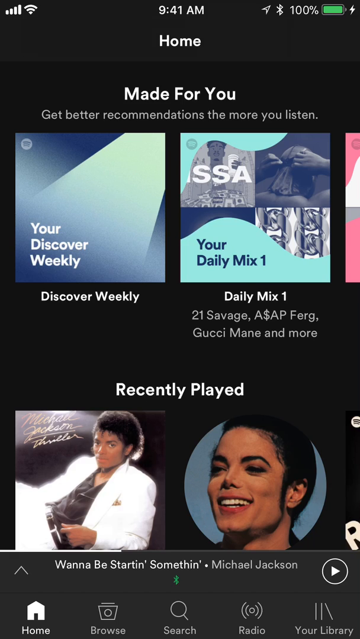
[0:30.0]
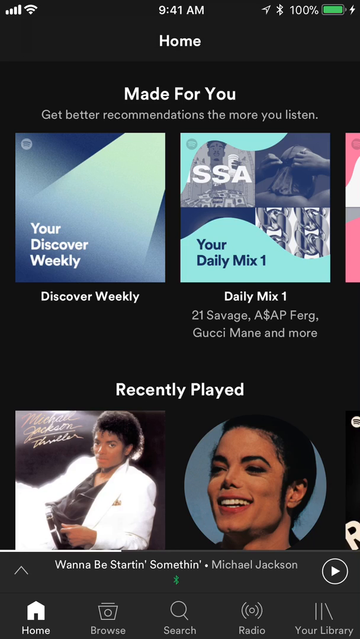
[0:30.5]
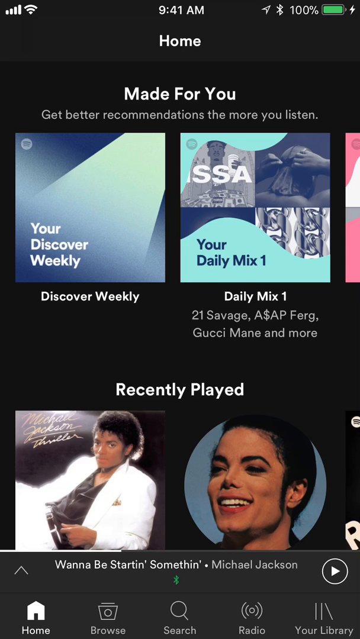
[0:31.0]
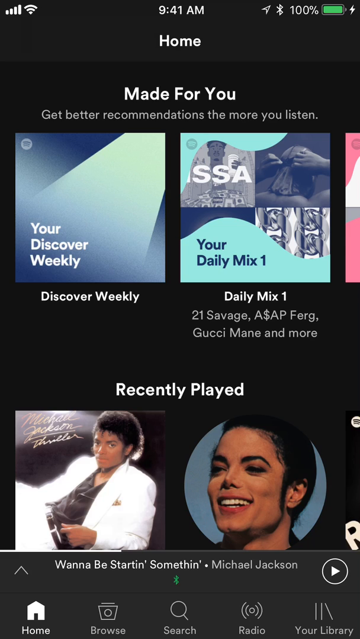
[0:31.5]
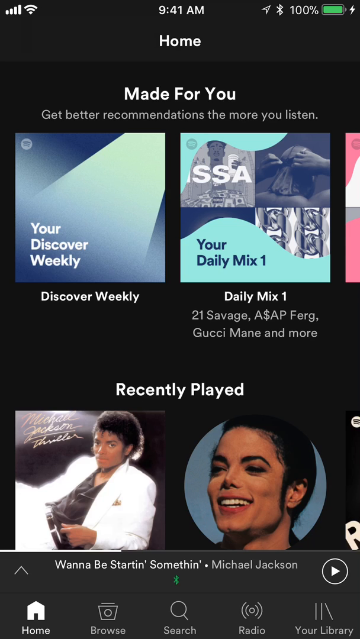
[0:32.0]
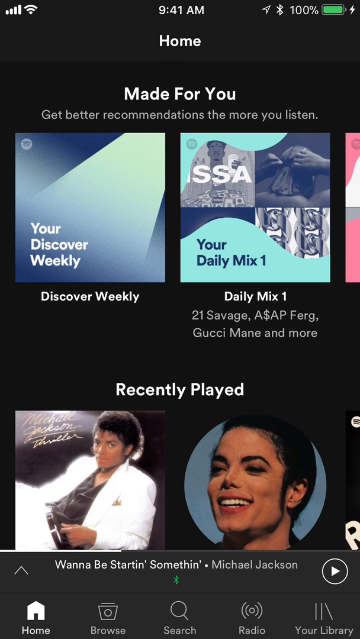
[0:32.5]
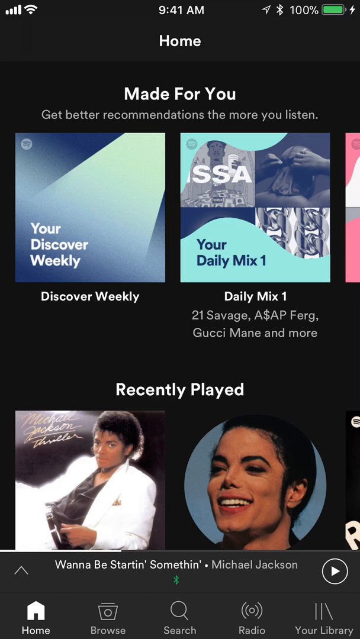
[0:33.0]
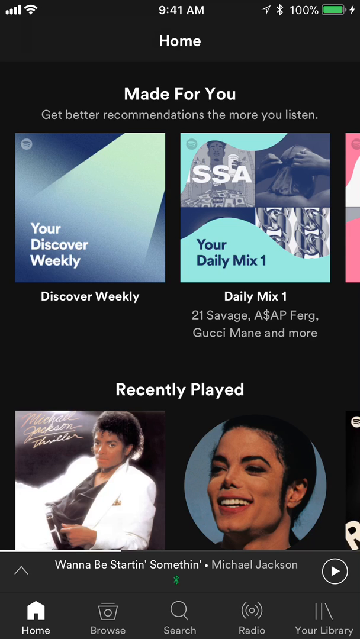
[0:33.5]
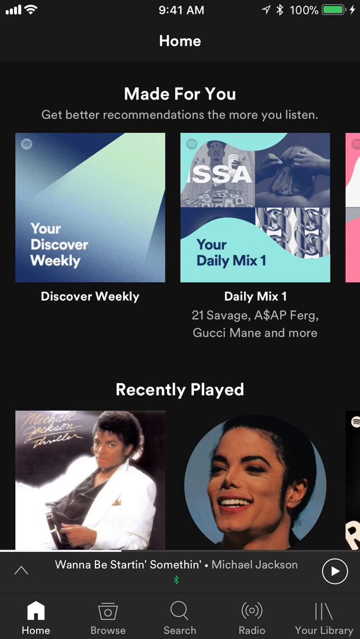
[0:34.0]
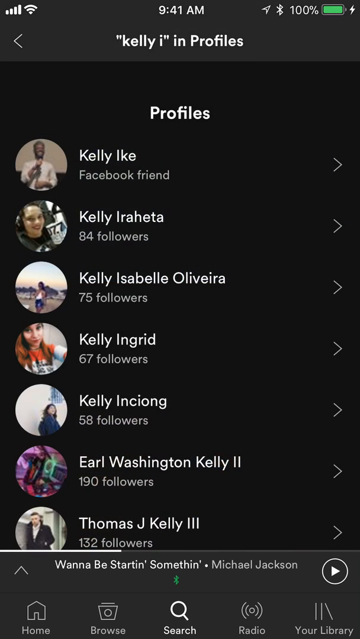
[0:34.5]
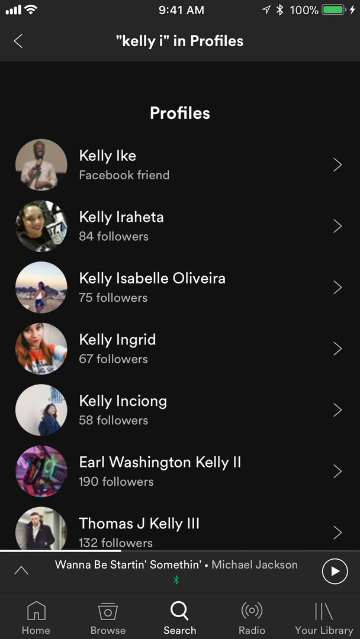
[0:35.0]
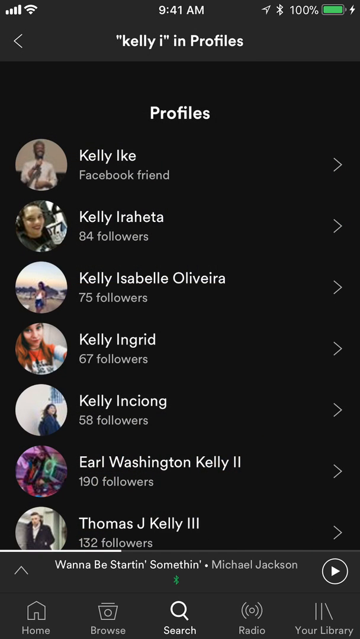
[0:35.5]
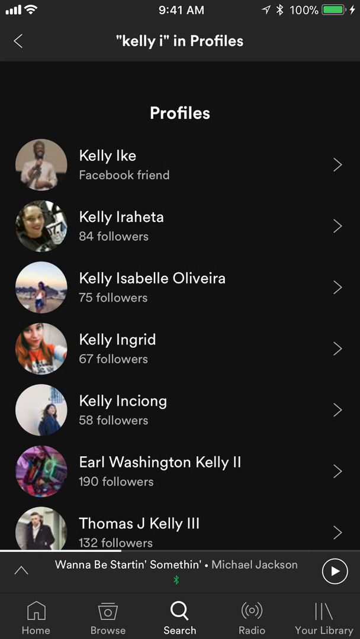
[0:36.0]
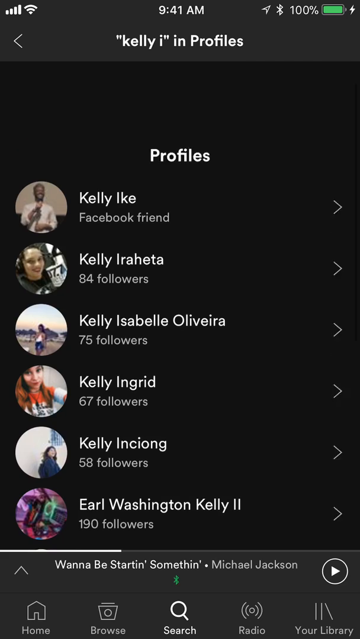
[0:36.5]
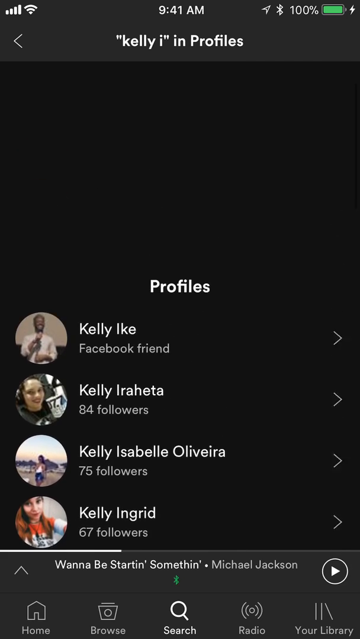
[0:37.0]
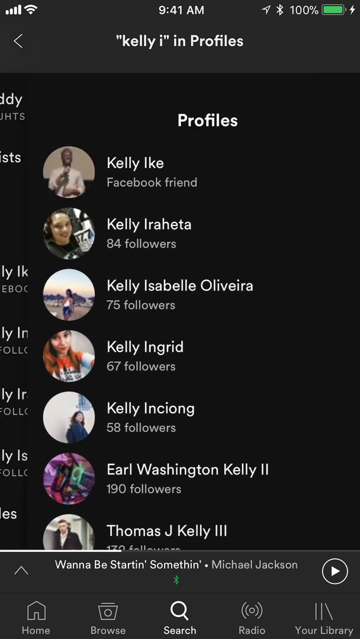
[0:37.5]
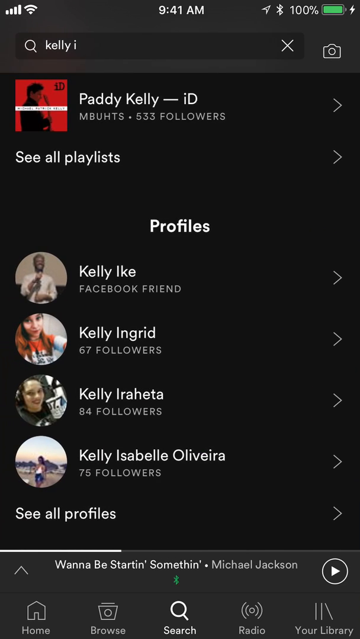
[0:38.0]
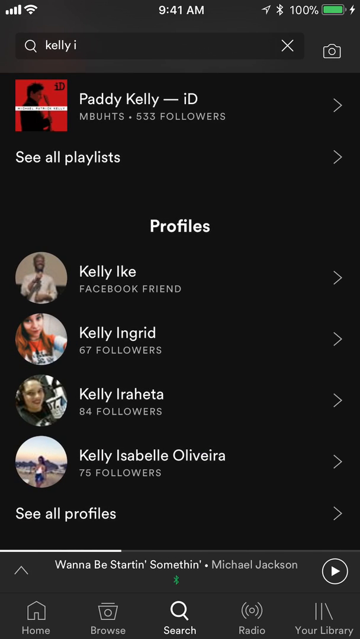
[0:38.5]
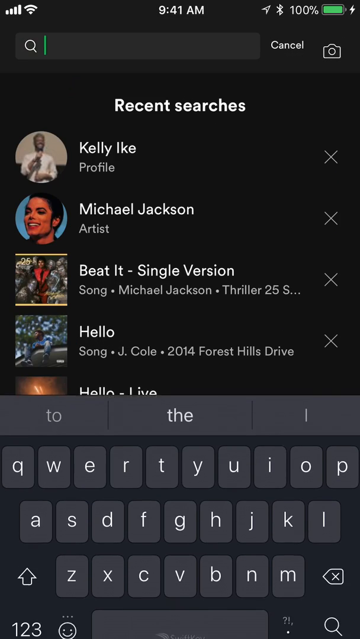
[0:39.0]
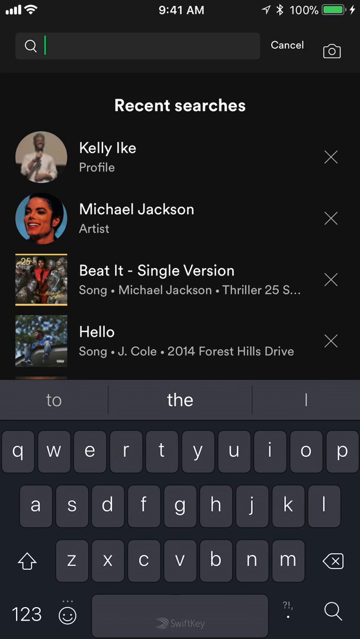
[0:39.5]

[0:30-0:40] The homepage of the streaming service is still shown, with Michael Jackson at the bottom and the daily mix suggestions and recommendations. Someone clicks the search bar and searches for Kelly; Kelly Ike appears under profiles and is selected. The recent searches then show the Kelly profile, Michael Jackson, the single Beat It by Michael Jackson, and the song Hello by J. Cole.